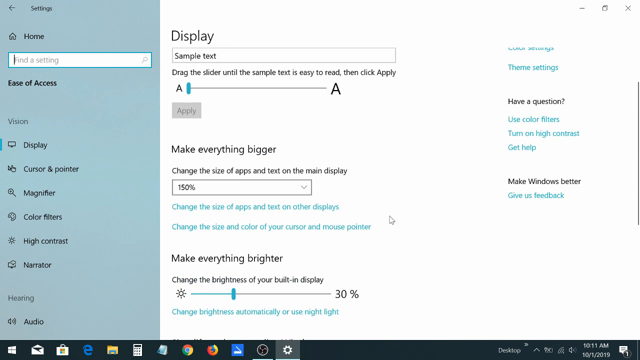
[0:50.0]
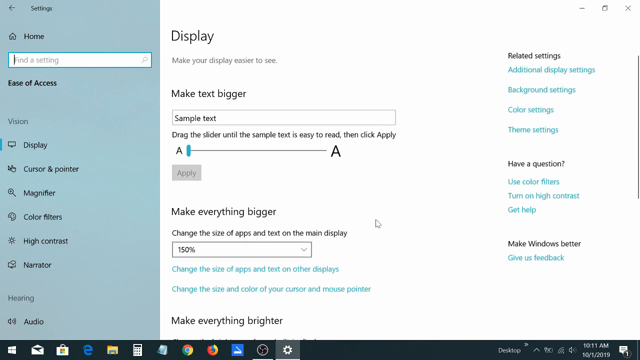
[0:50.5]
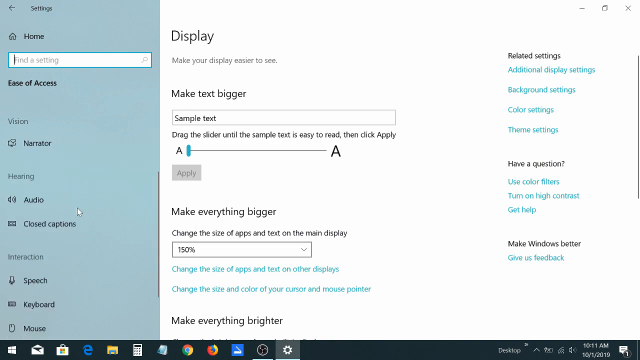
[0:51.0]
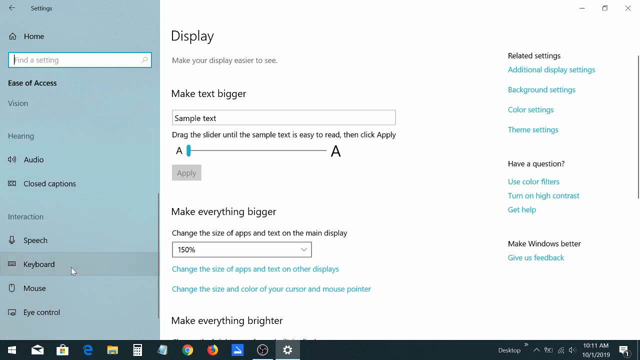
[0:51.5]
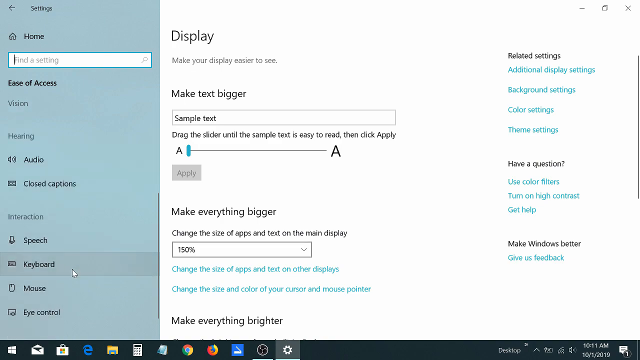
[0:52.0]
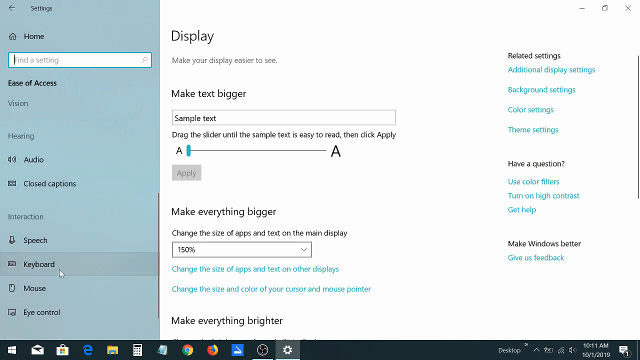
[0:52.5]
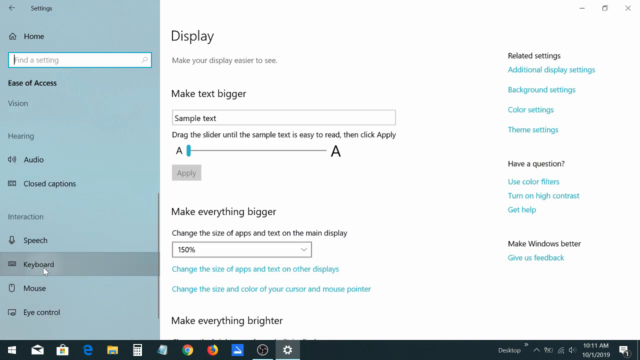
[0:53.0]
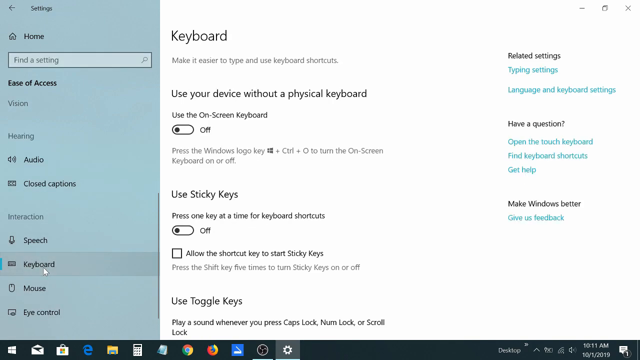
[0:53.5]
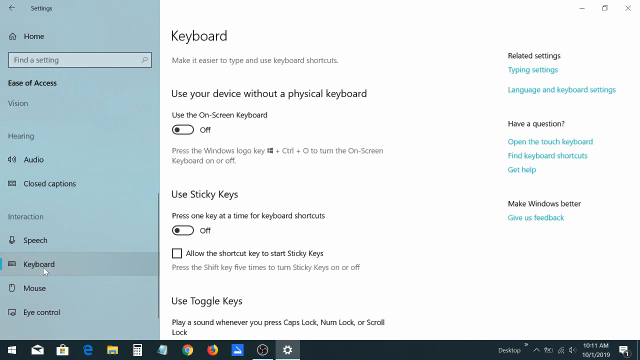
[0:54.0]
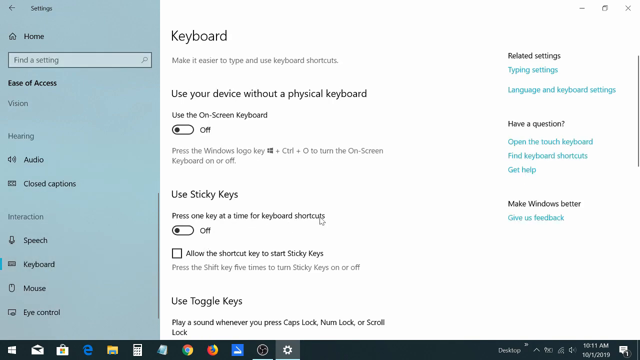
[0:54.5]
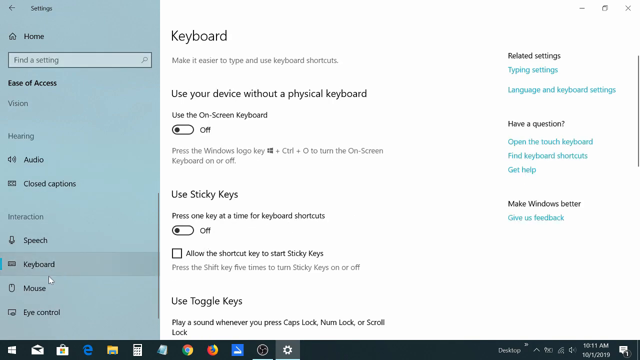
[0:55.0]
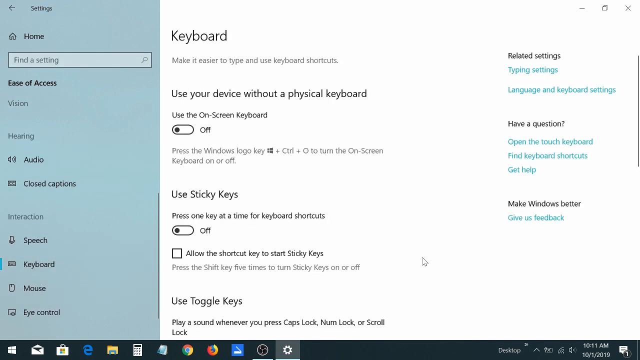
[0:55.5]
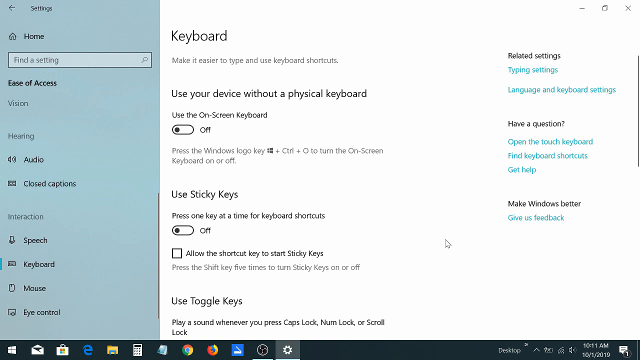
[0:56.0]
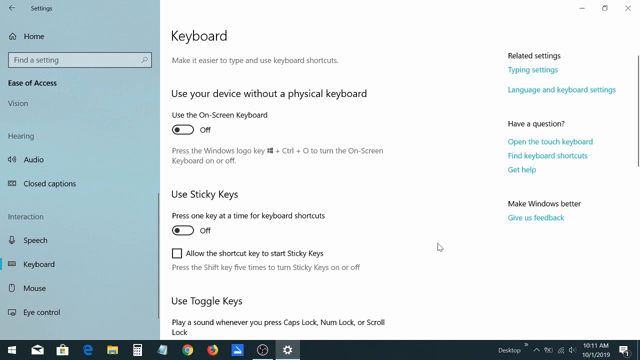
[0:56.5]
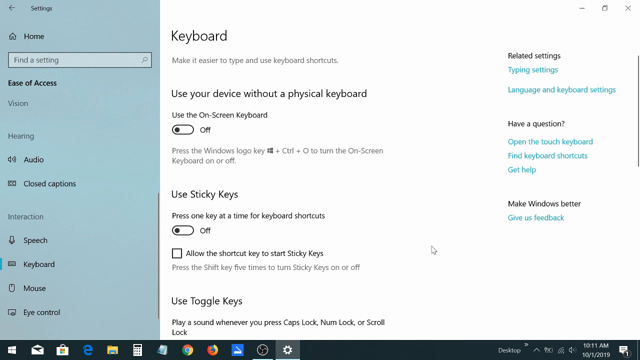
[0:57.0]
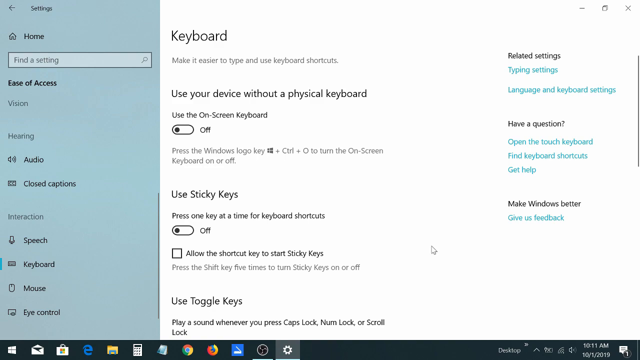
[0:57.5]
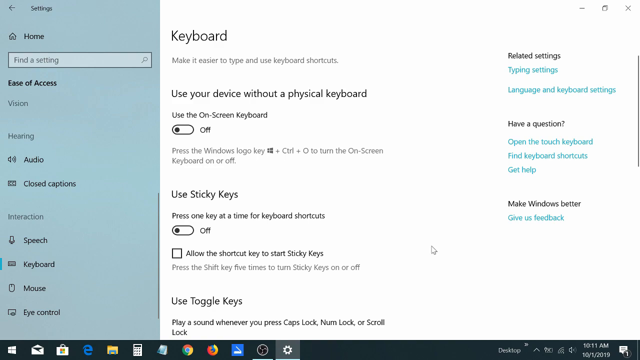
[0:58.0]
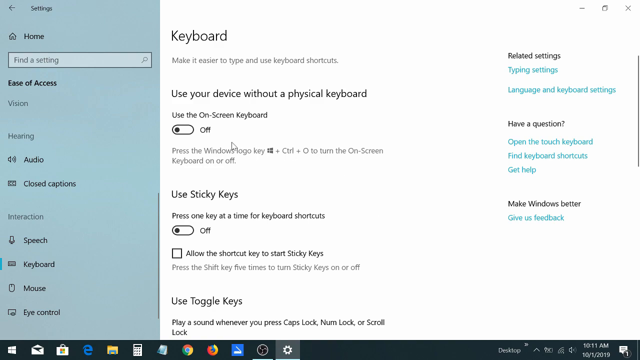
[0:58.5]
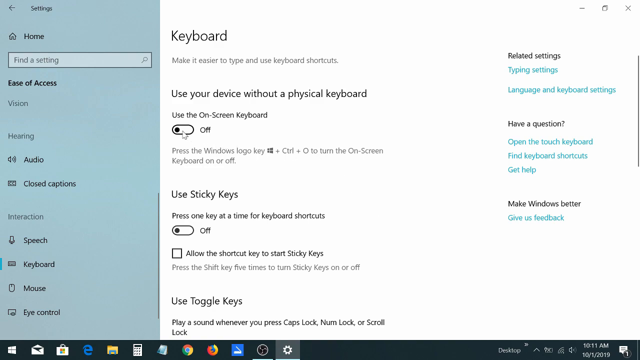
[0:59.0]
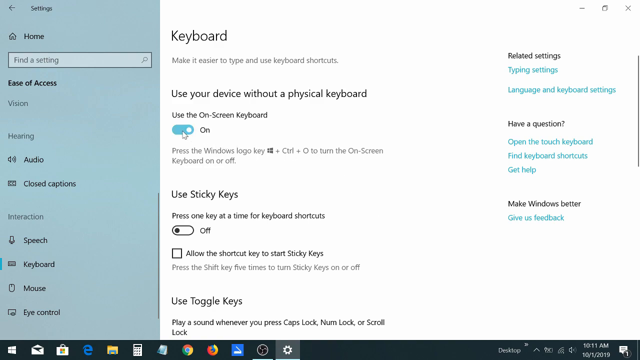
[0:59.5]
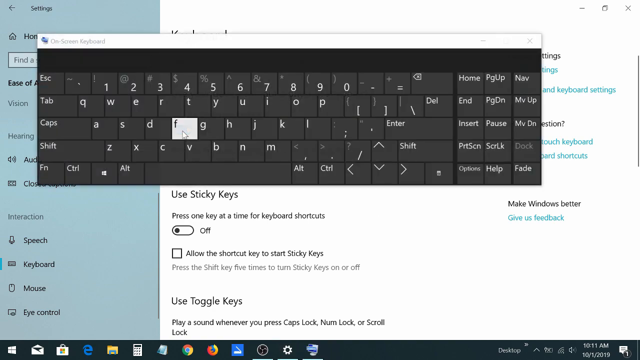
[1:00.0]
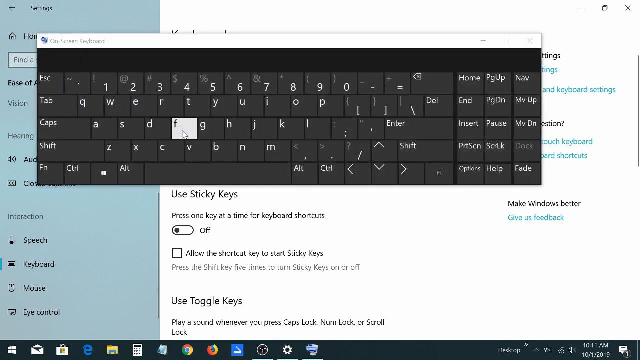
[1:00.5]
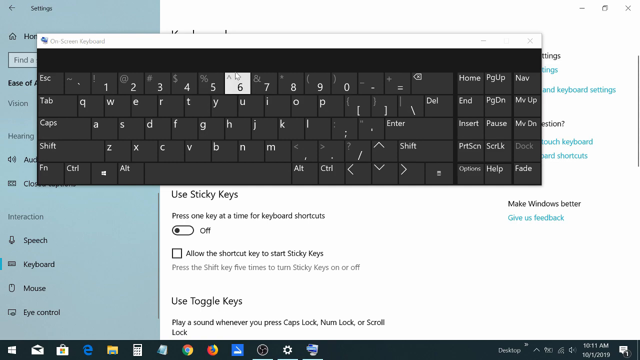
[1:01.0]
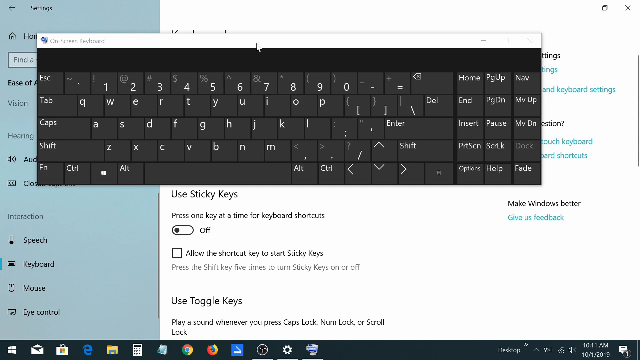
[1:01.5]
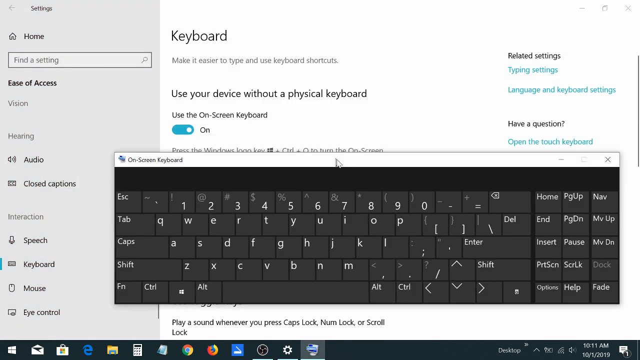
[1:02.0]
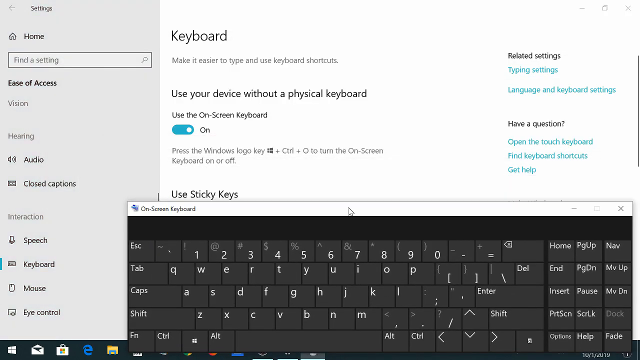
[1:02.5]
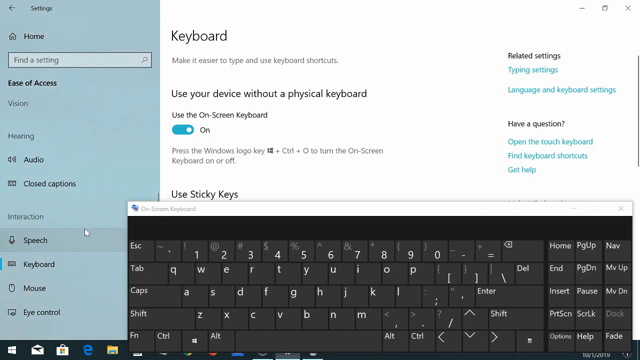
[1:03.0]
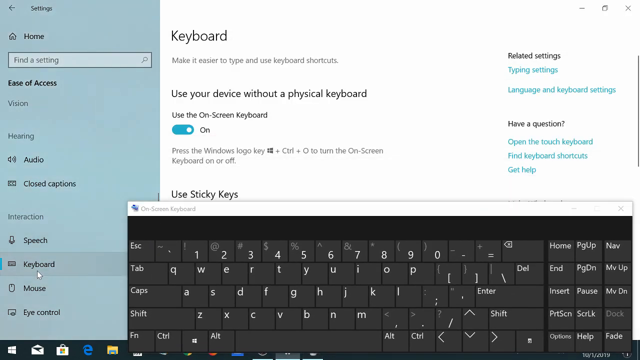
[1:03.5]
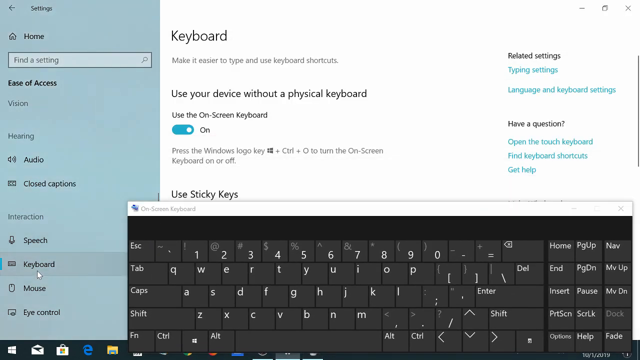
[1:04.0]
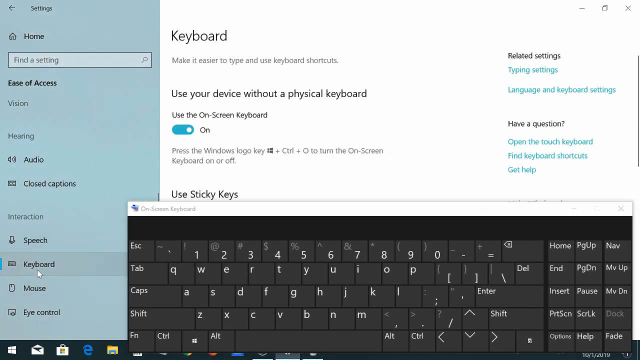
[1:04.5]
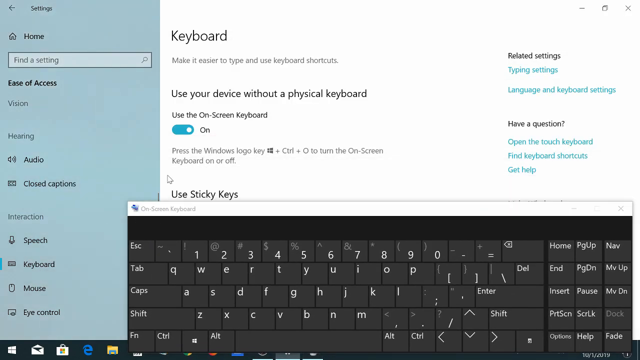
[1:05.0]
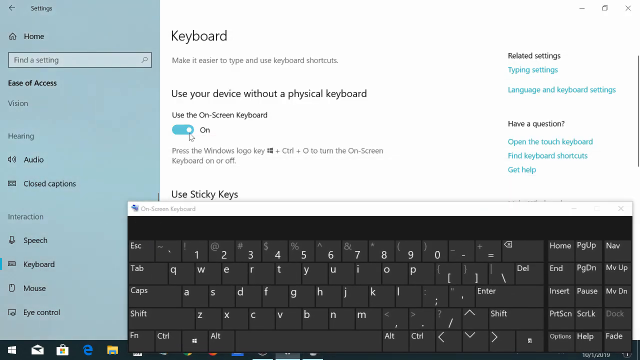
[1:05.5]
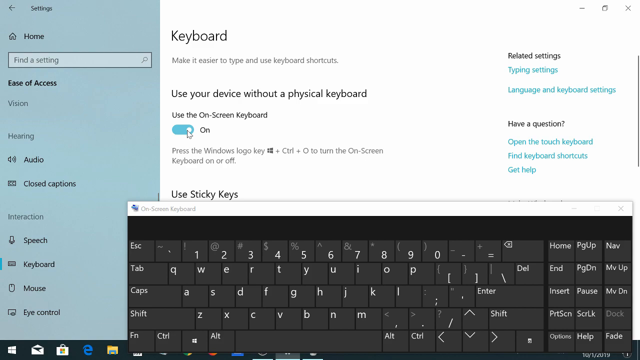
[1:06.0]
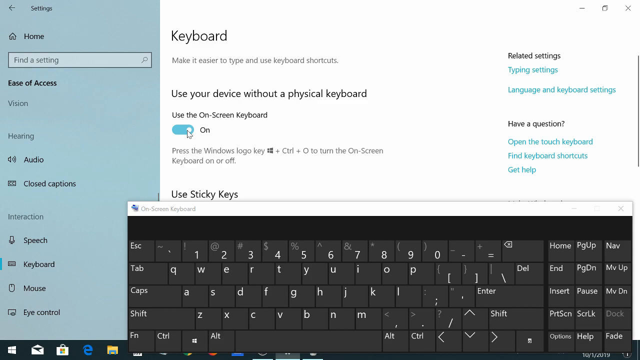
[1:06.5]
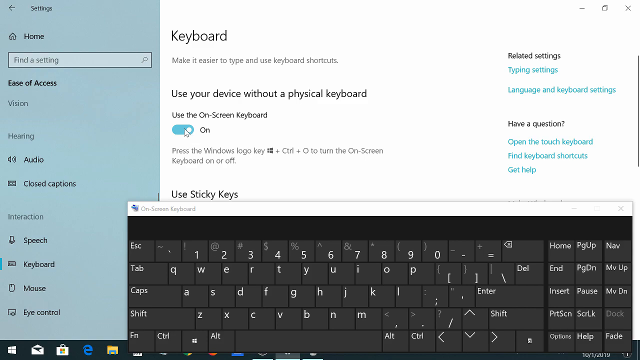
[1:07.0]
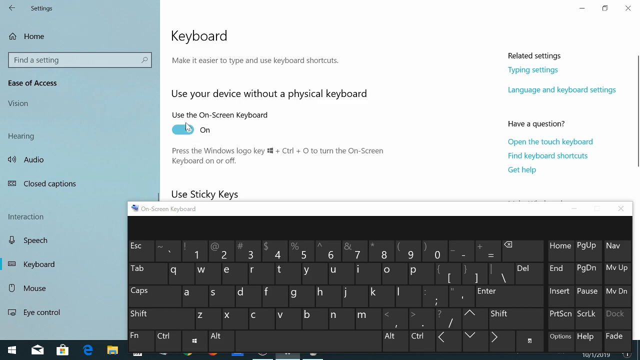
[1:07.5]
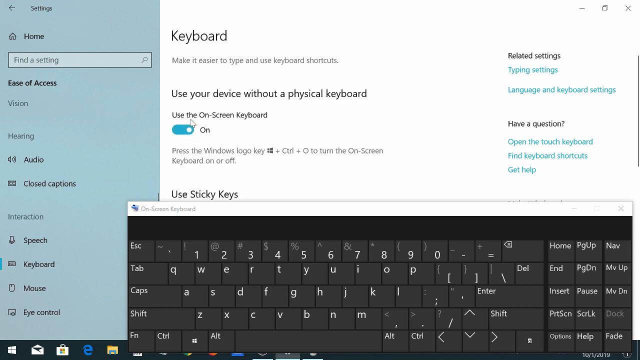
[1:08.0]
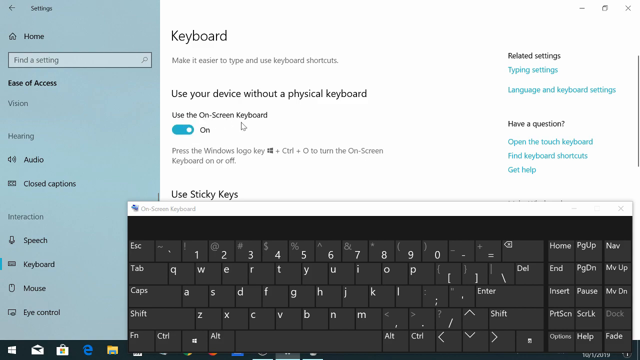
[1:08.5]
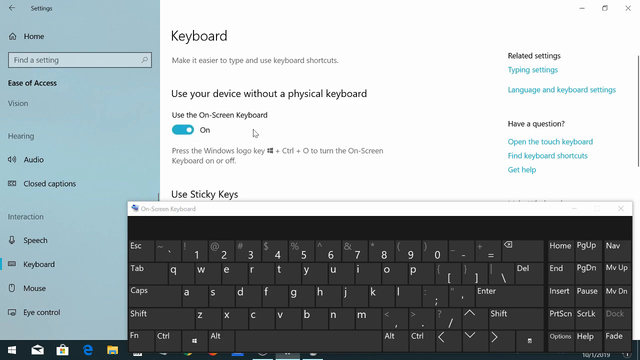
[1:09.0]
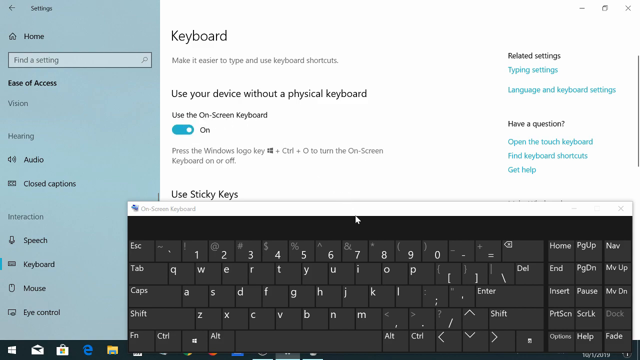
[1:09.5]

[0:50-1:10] The person is in the Windows display settings, which are blue on the left and white on the right, scrolling up. They click on the keyboard option and pull up a keyboard on the screen, move it down, and highlight the keyboard entry. They then hover over the use the on-screen keyboard option.